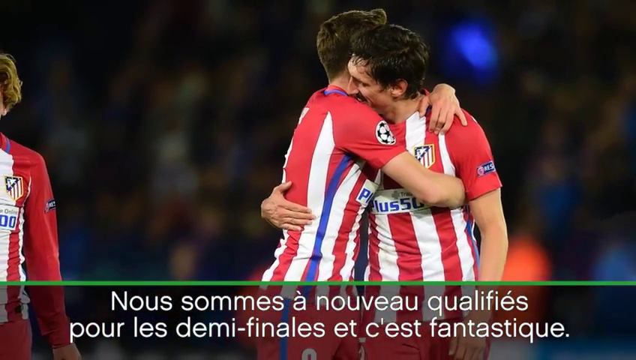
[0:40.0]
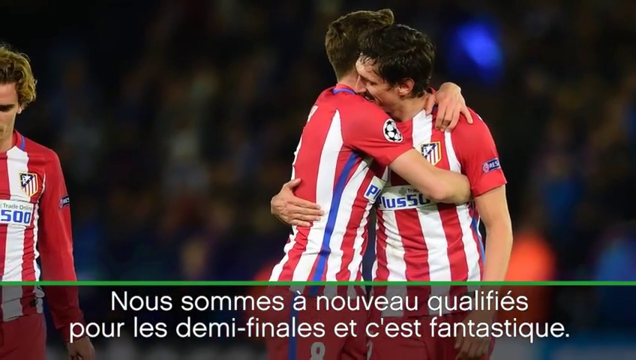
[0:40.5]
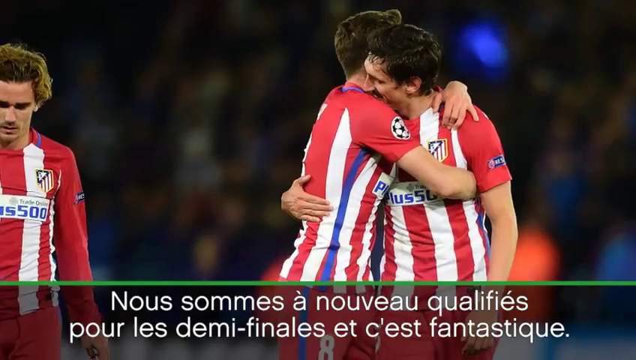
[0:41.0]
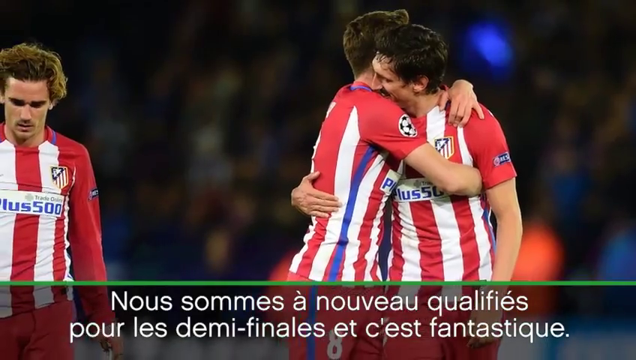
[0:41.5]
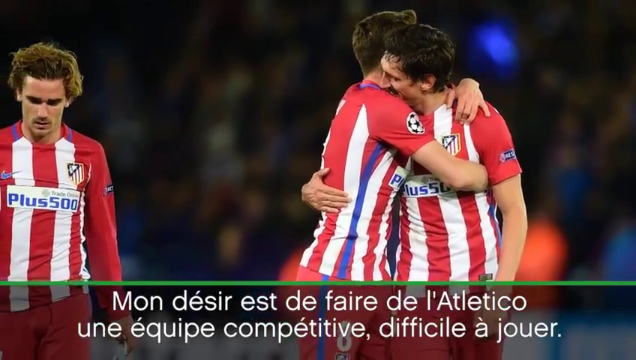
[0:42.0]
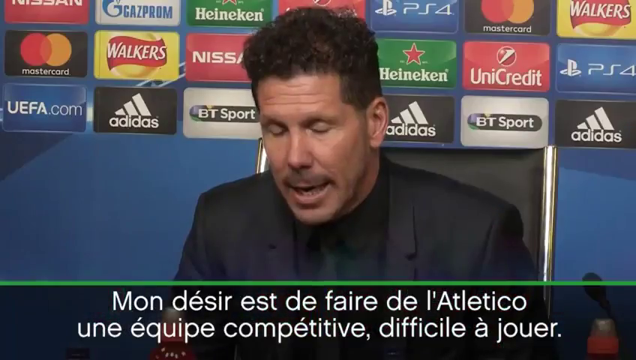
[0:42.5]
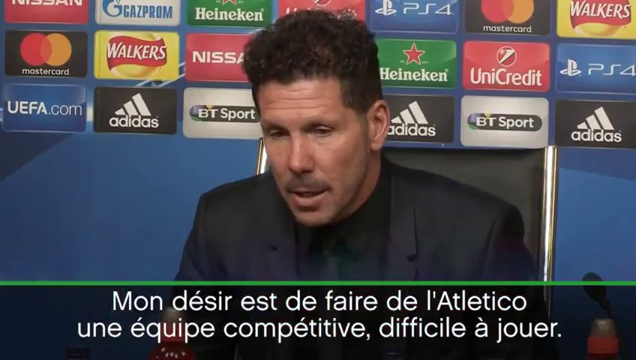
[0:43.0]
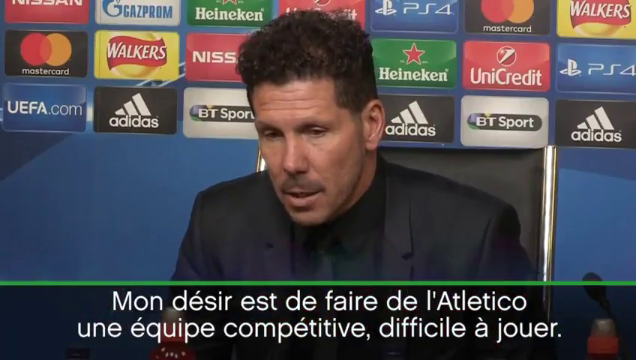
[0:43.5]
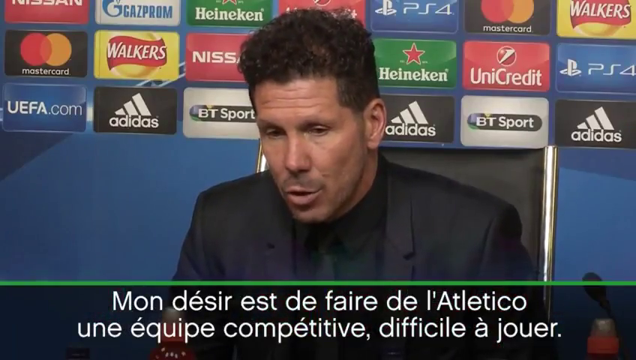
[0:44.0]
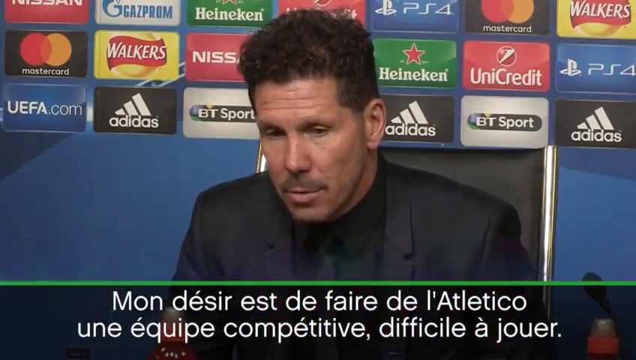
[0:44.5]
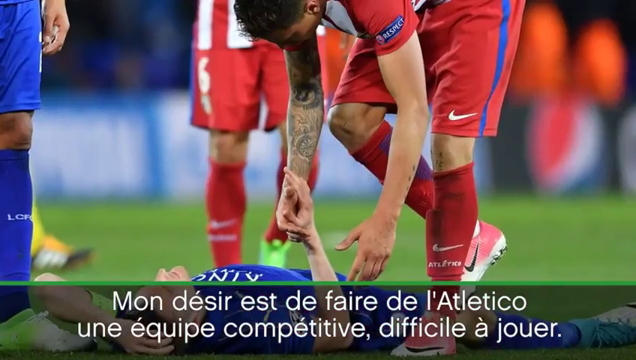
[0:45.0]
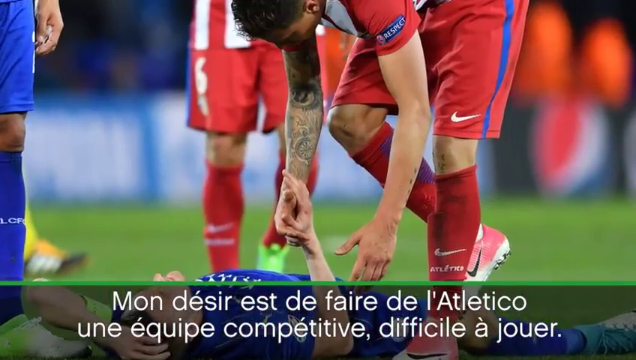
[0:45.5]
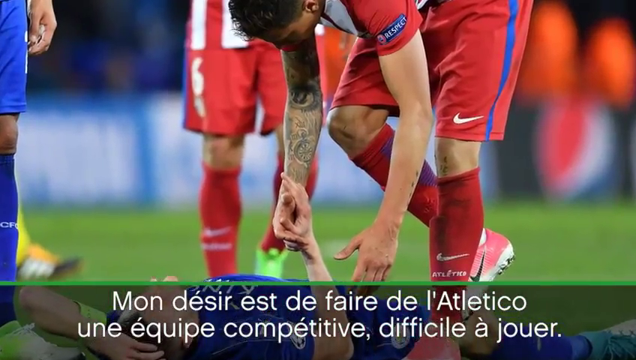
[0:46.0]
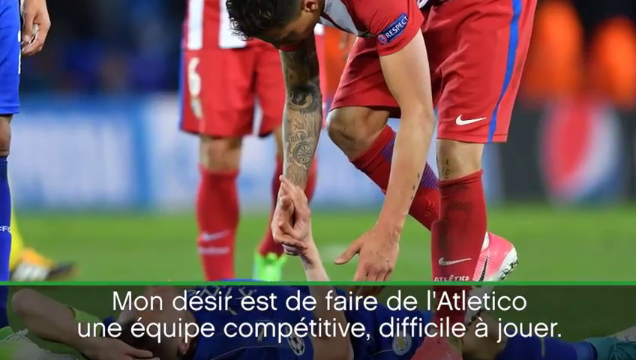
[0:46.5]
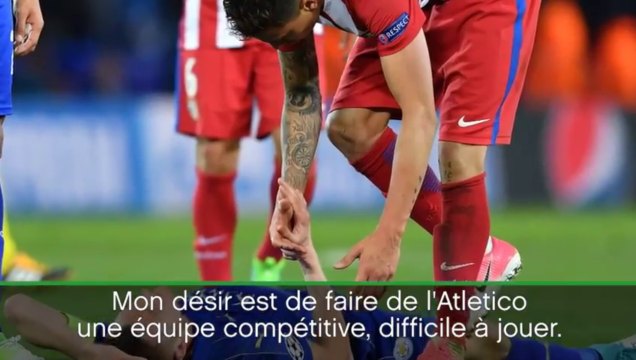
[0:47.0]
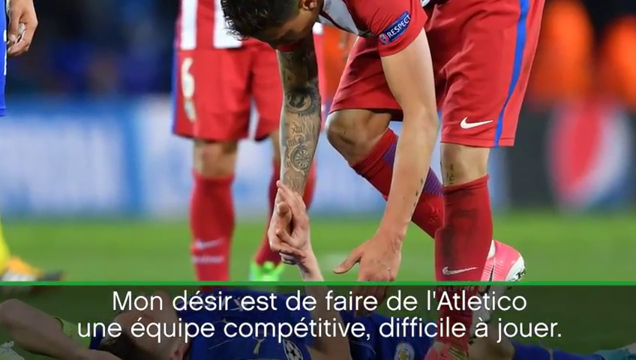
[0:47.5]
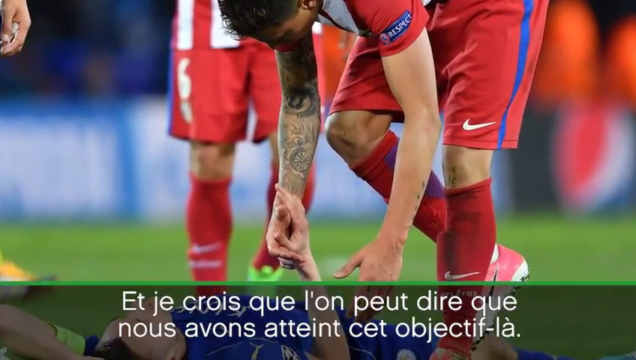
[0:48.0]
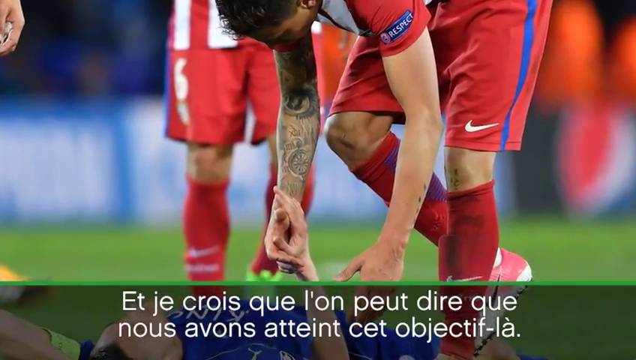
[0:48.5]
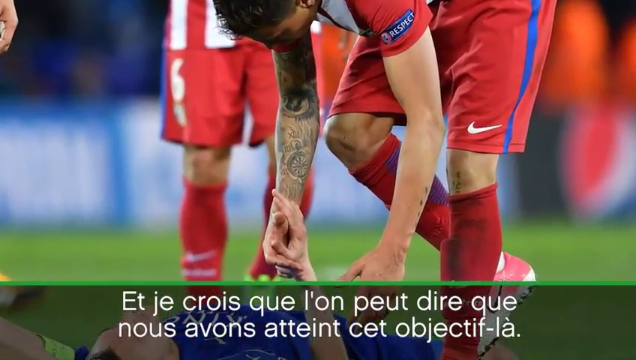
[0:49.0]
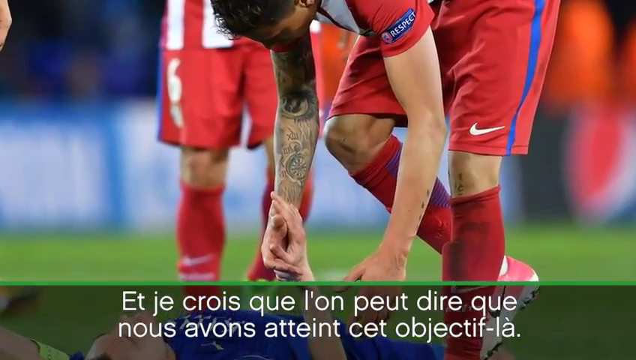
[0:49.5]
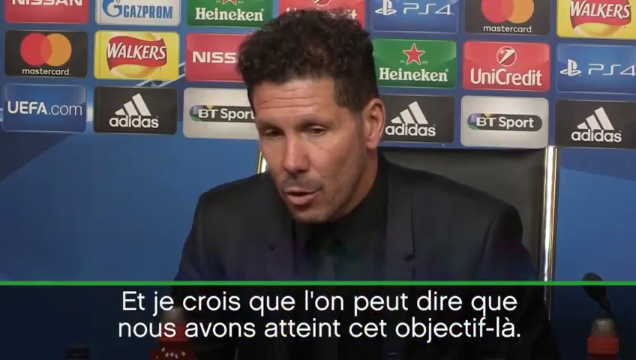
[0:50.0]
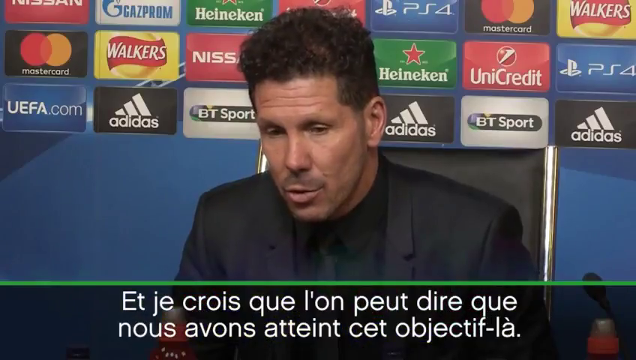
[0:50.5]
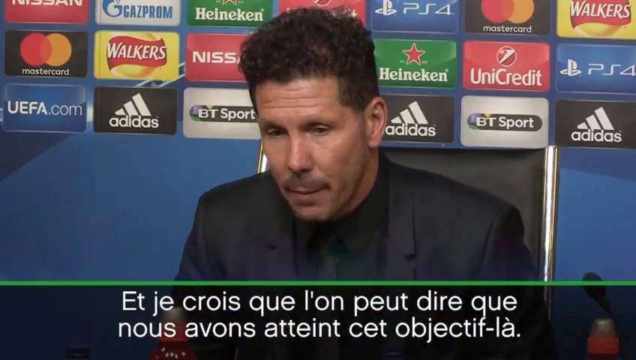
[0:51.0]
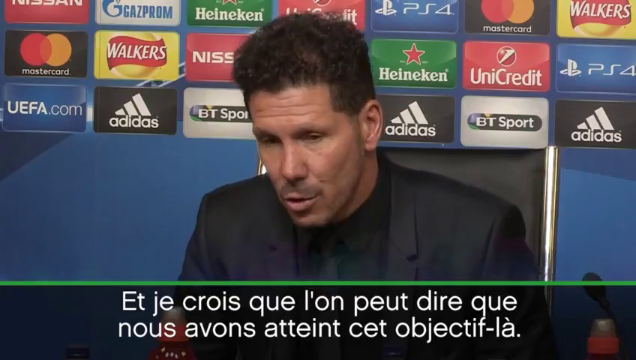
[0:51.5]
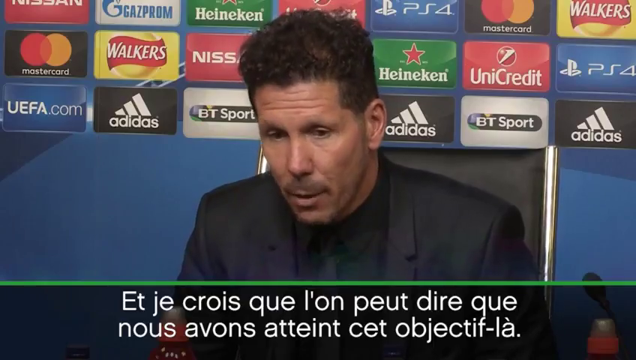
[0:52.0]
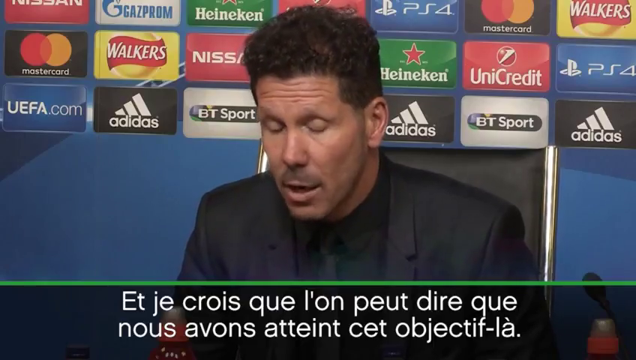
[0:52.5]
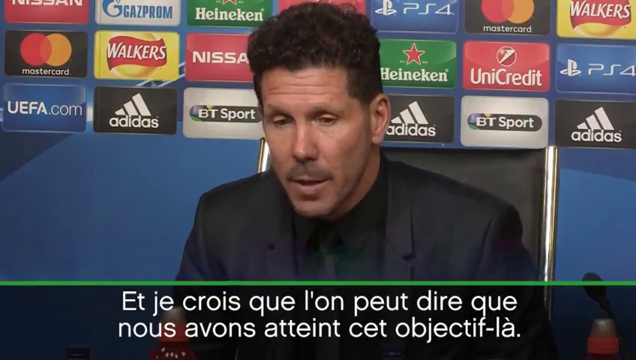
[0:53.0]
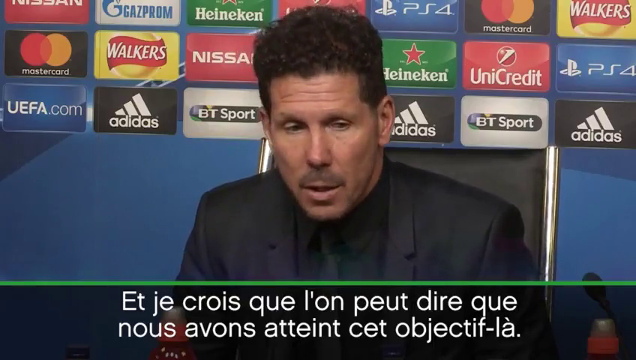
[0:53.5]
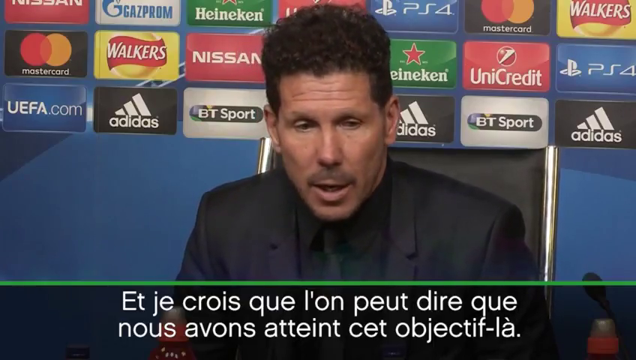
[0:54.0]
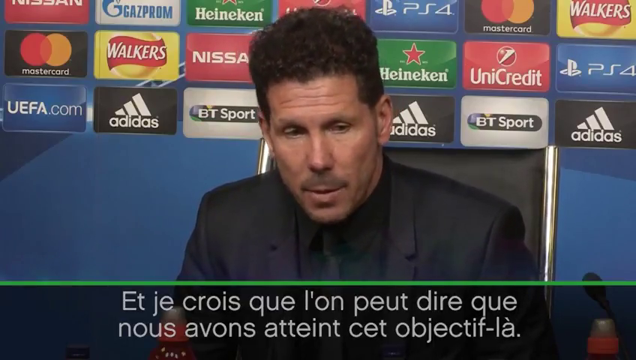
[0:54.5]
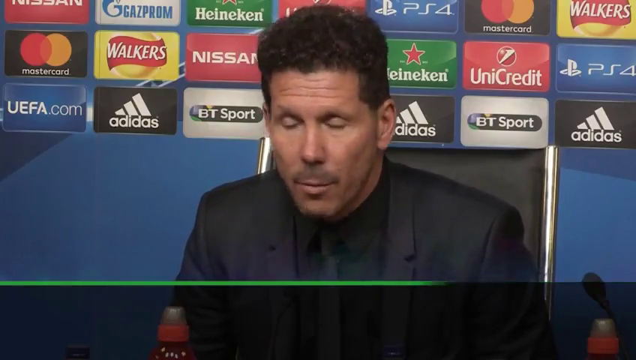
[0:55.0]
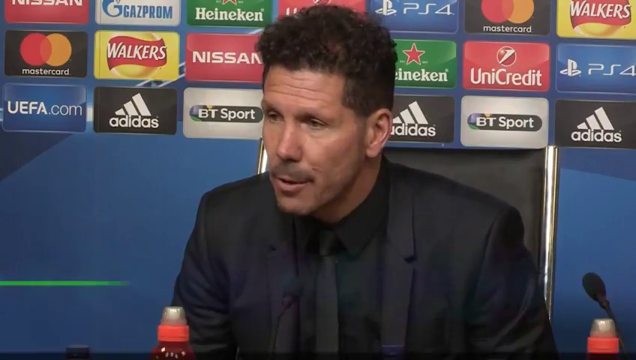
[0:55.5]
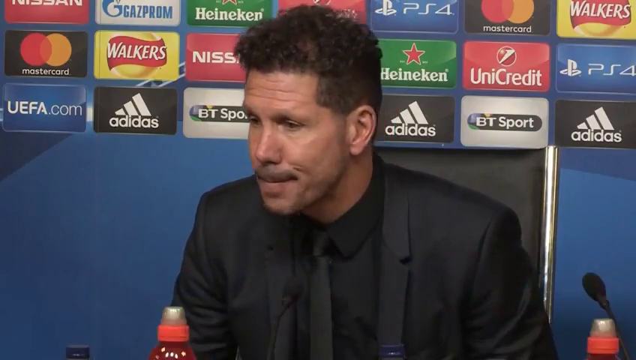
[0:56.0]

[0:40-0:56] Atletico Madrid players are hugging on the pitch, then the video cuts back to Diego Simeone in the press conference. French writing is still at the bottom of the screen, apparently a French interpretation of what he is saying. A picture follows of a Leicester City player lying on the floor while an Atletico Madrid player in a red and white striped top, red shorts and red socks leans down to help him up. The view zooms in on that player, who has tattoos on his right arm, then cuts back to Diego Simeone in the press conference. The background is blue, and the sponsors include uefa.com, adidas, btsport, ps4, unicredit, heineken, nissan, walkers and mastercard, each in a little rectangle with its name in different colours and its logo included.